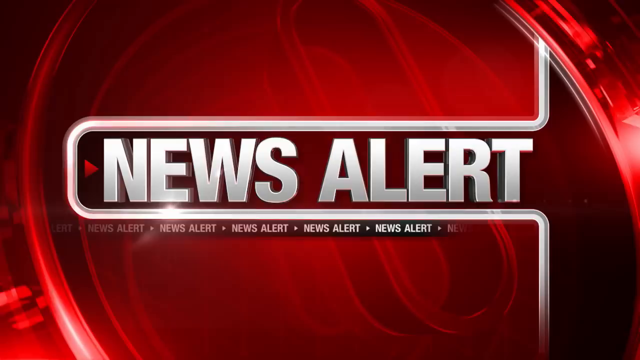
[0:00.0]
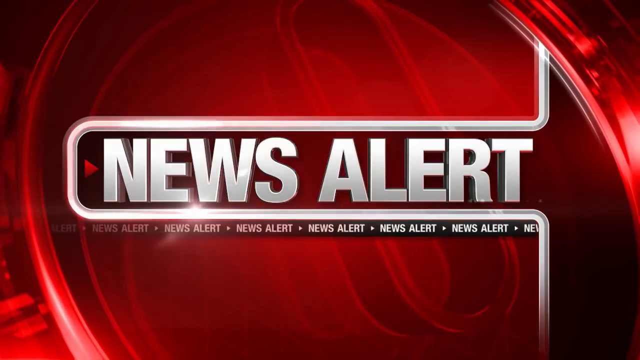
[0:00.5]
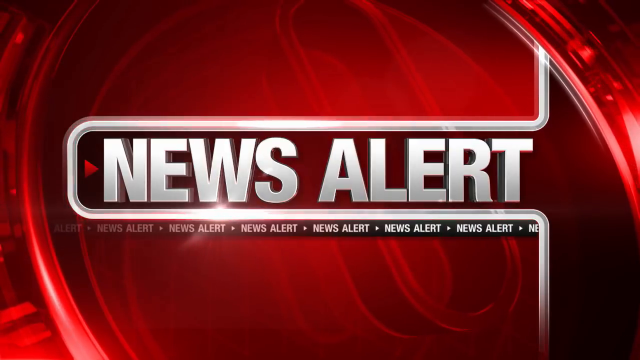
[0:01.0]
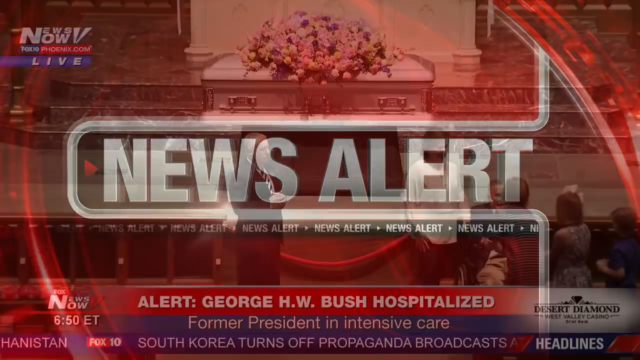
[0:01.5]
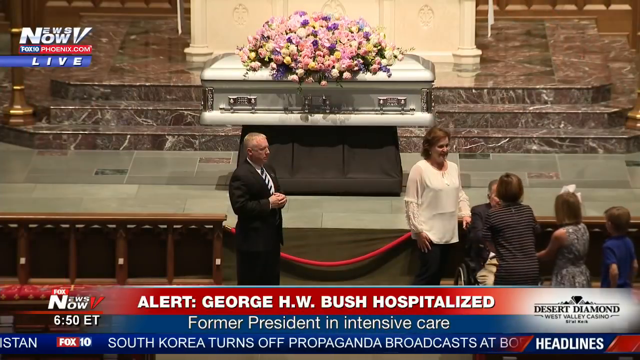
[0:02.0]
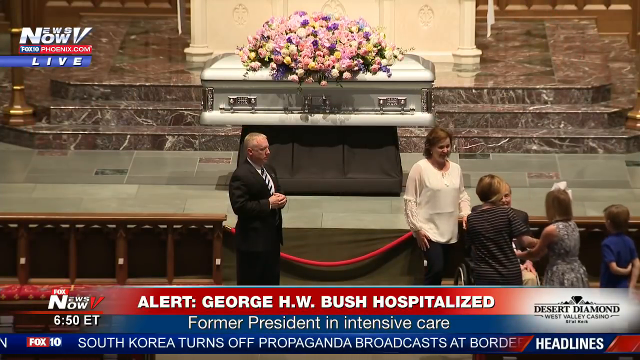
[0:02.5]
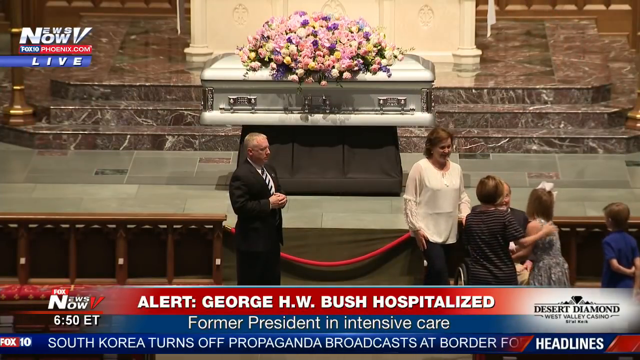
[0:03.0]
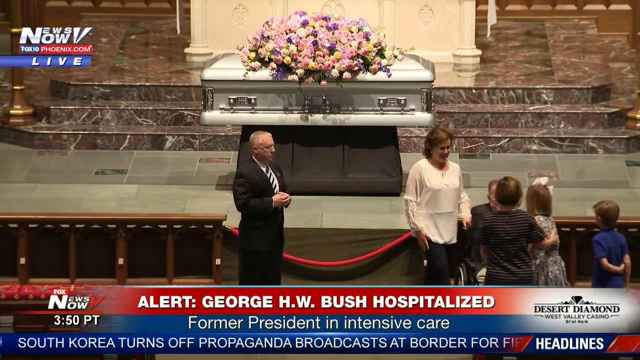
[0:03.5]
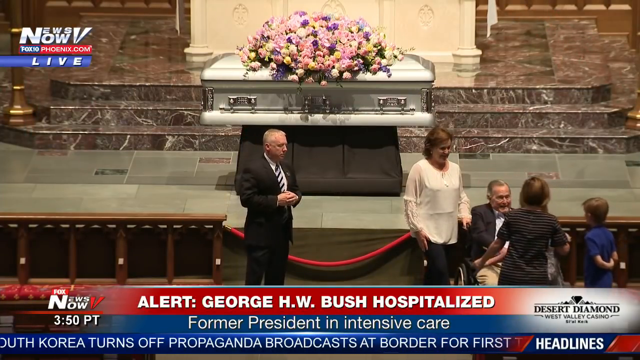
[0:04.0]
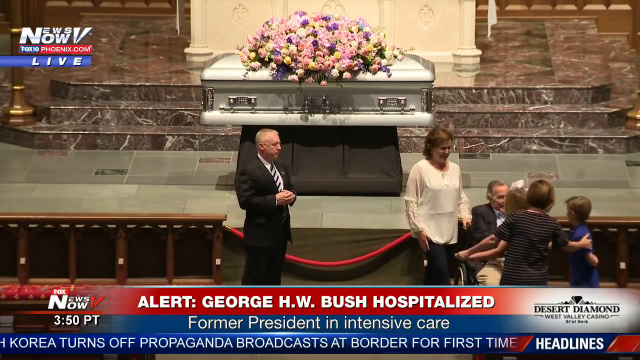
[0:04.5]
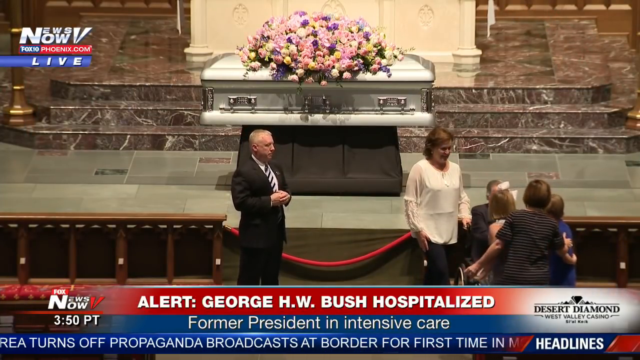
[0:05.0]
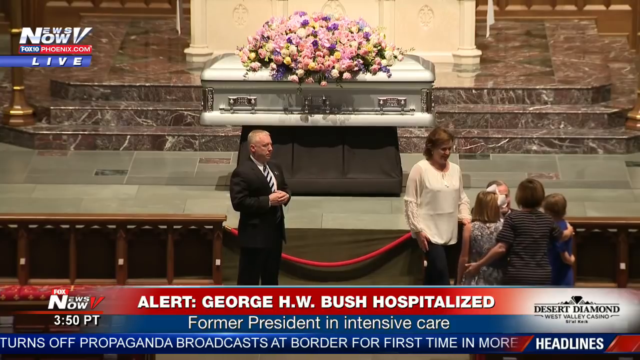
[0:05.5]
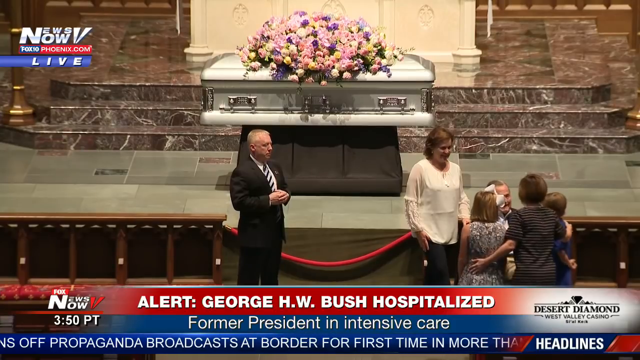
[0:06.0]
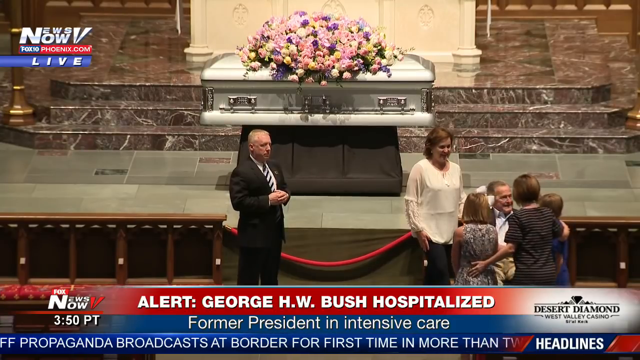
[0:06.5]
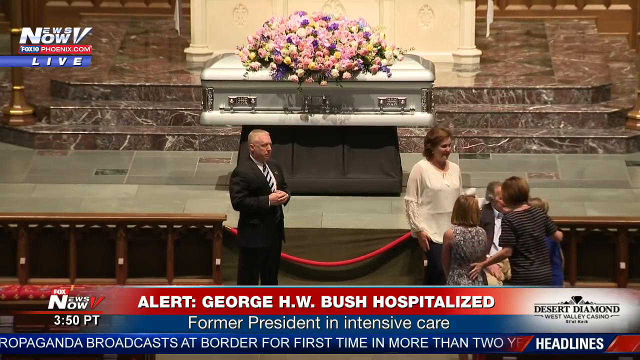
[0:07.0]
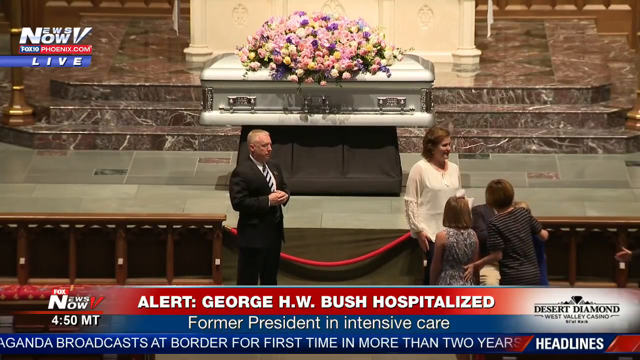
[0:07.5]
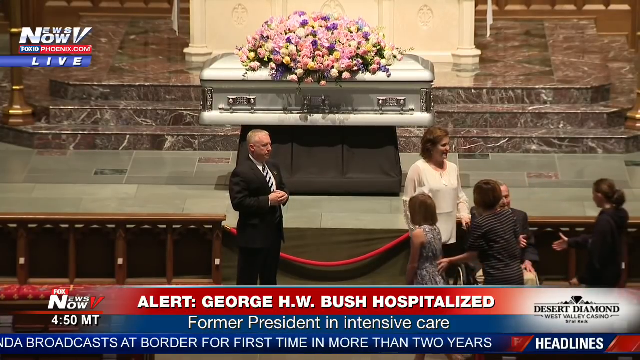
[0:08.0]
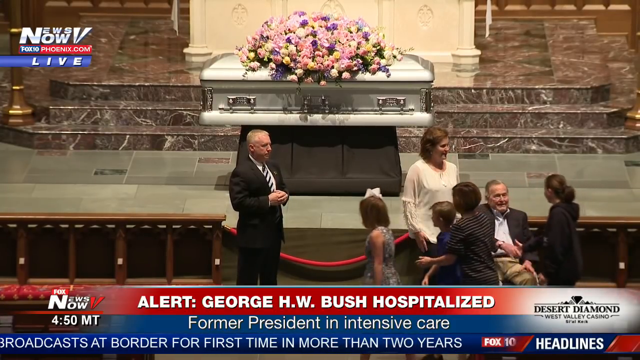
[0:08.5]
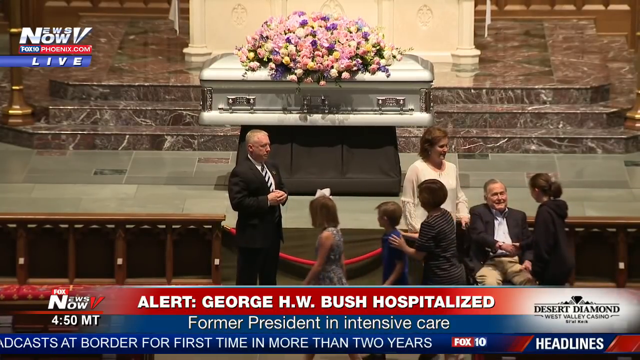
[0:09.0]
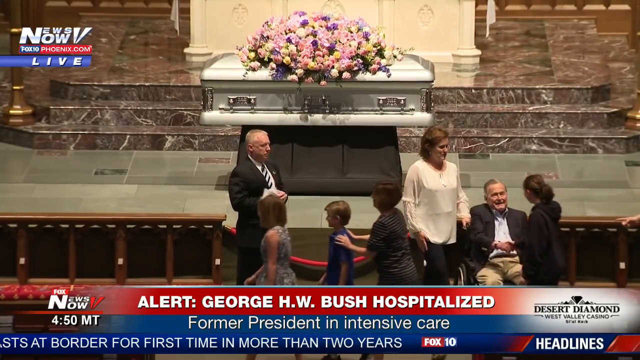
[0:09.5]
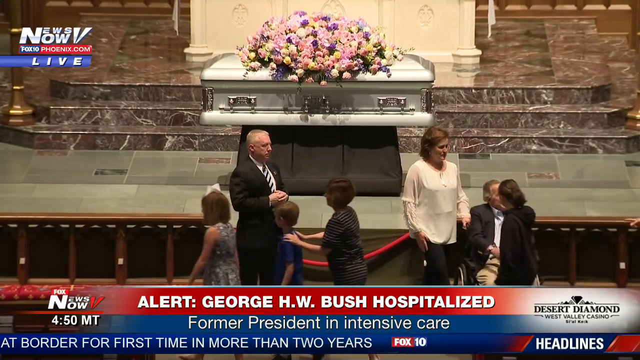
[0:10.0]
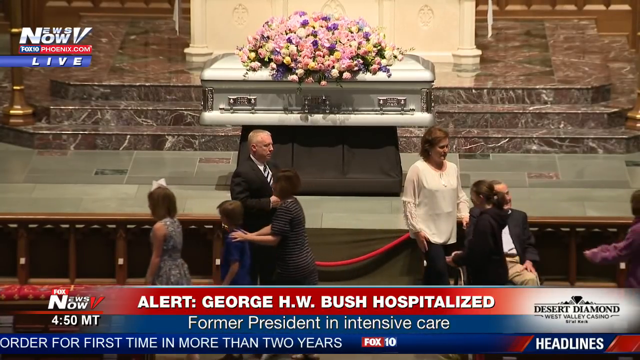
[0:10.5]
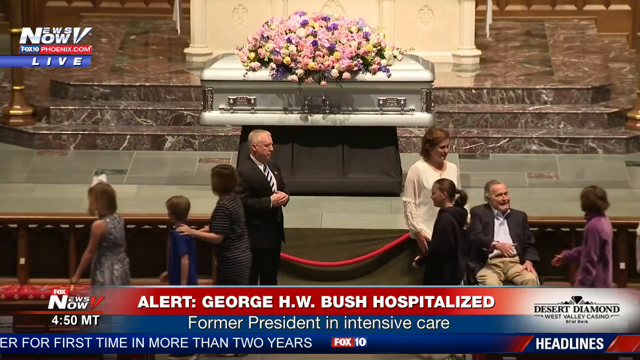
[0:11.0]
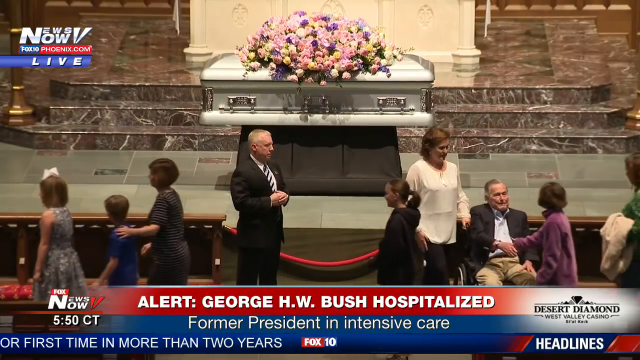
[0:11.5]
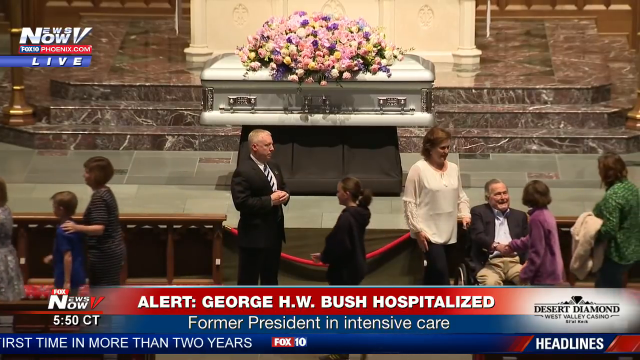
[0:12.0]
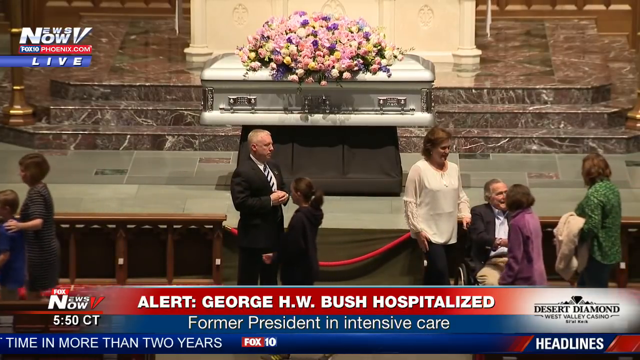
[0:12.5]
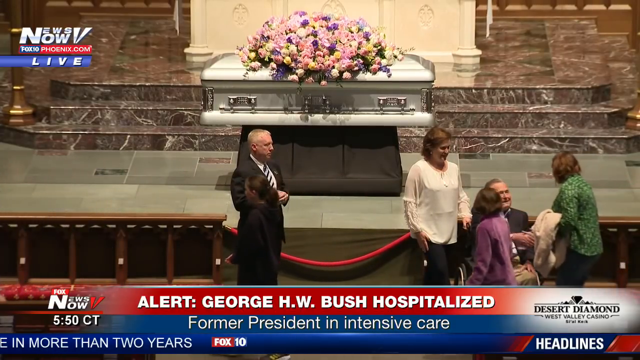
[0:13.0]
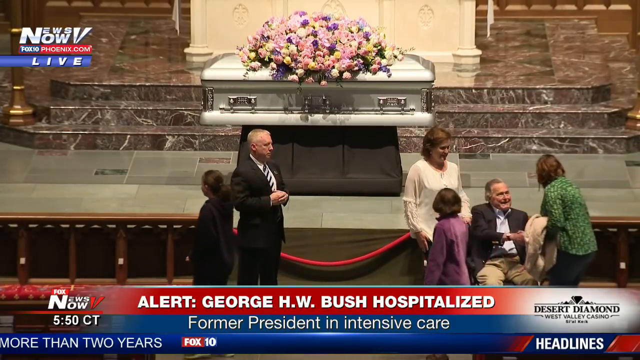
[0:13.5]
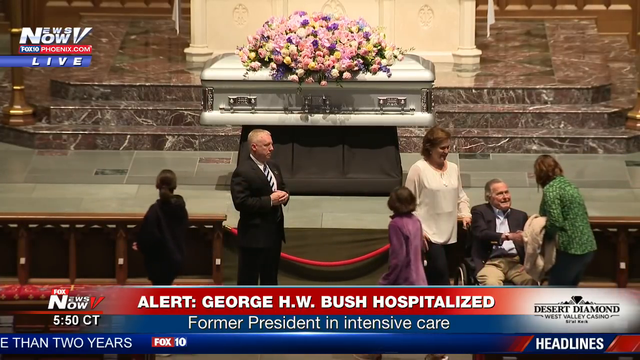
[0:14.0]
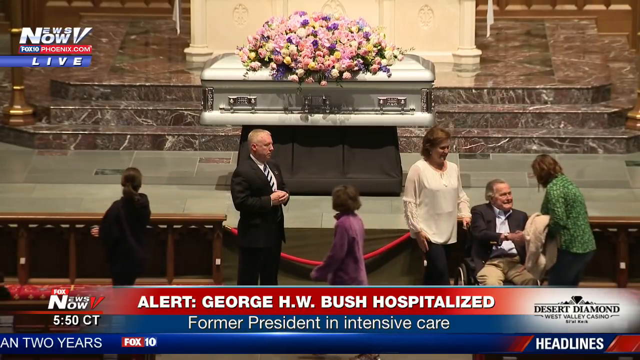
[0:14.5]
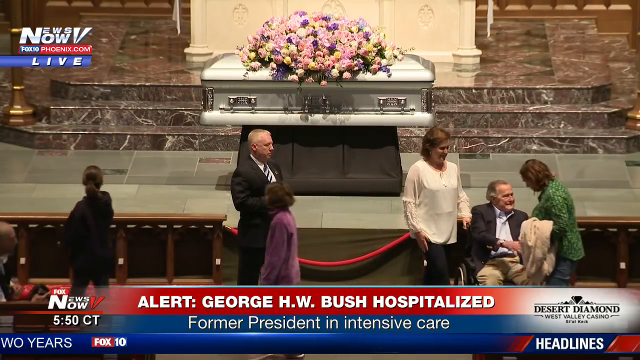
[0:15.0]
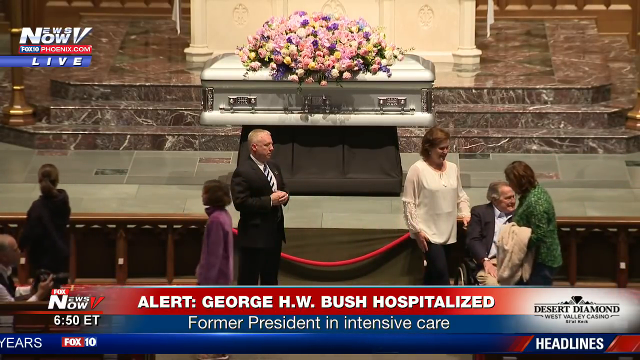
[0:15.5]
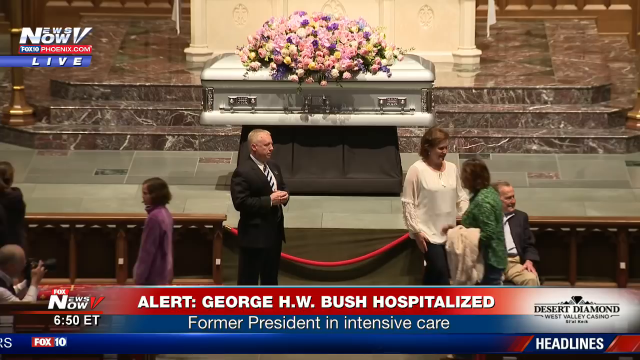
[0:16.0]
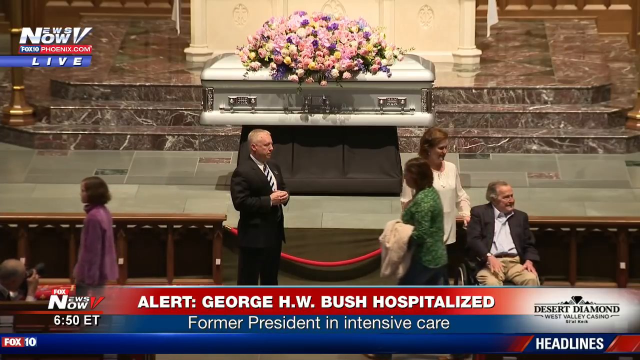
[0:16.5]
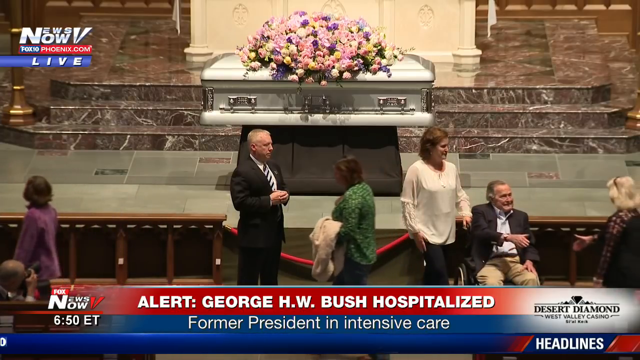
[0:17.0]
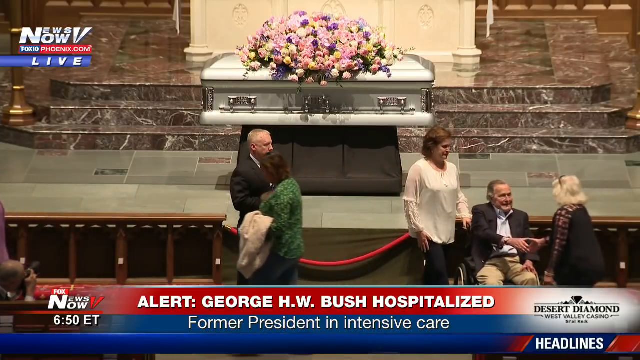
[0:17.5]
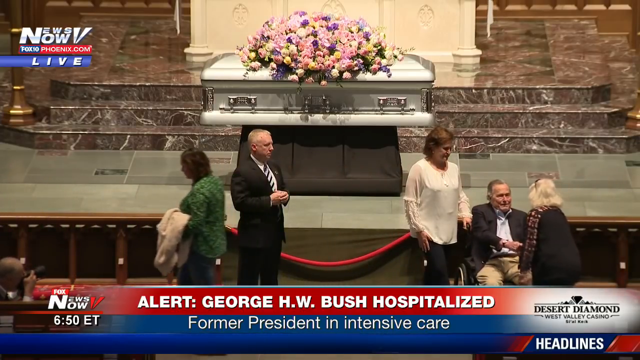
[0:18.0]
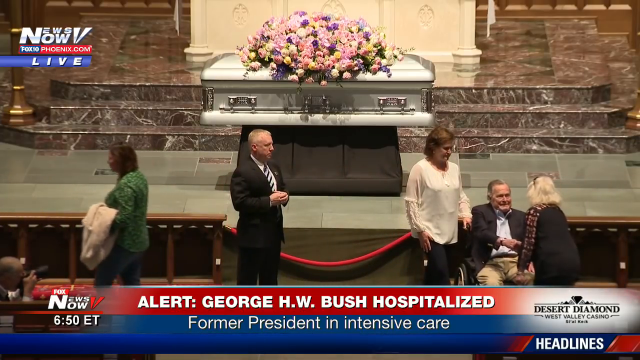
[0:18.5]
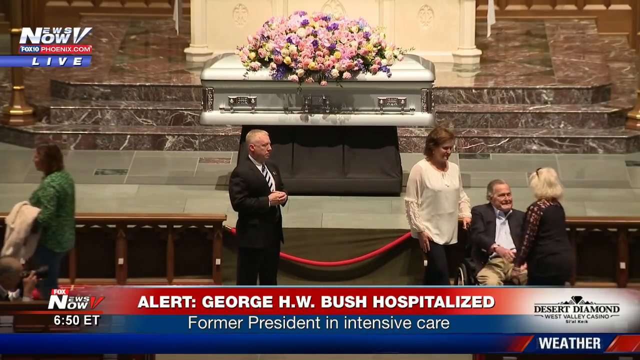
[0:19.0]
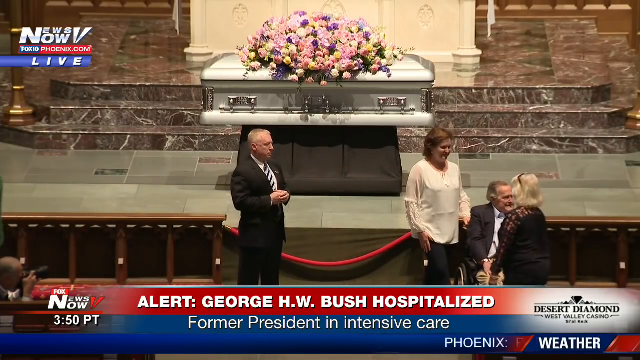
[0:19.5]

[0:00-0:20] The video opens on a red background with a banner that says "News Alert." It then transitions to what appears to be a memorial service. A casket is covered all over with flowers in different shades of yellow, purple, and pink, and some people are near the bottom of the screen. The headline at the bottom says "Alert George H.W. Bush hospitalized" and "former president in intensive care." A line of children and other individuals comes up to shake George H.W. Bush's hand; he is sitting in a wheelchair on the right side of the screen. At the top left, text says "news now Fox 10 phoenix.com live," and at the bottom right there is a small logo that says "Desert Diamond West Valley Casino." There is quite a large stage, and a red ribbon sort of thing is in the middle bottom area.